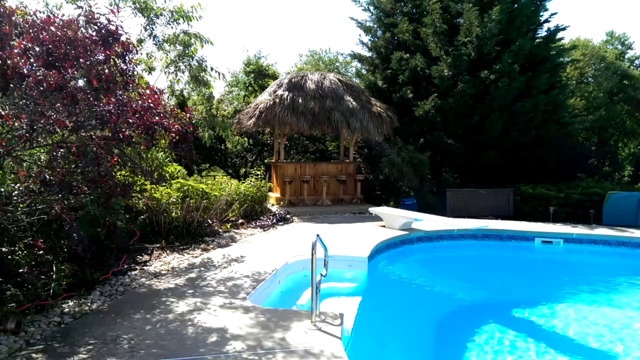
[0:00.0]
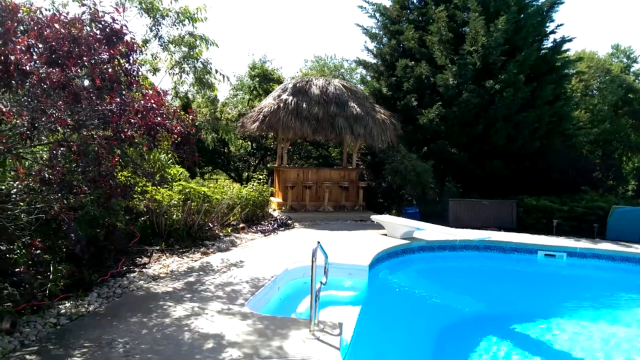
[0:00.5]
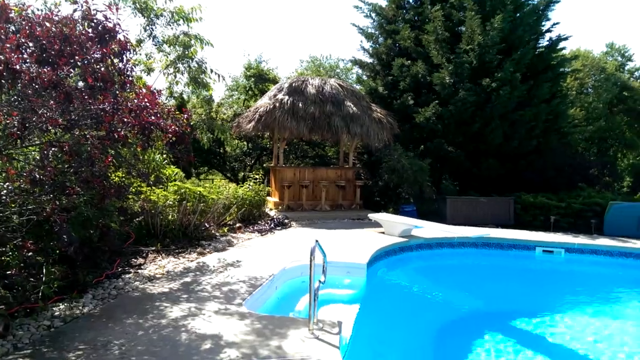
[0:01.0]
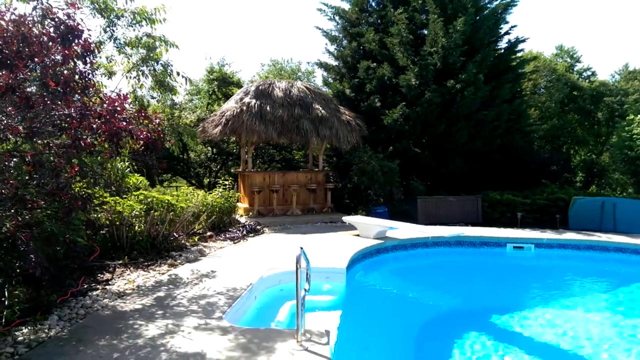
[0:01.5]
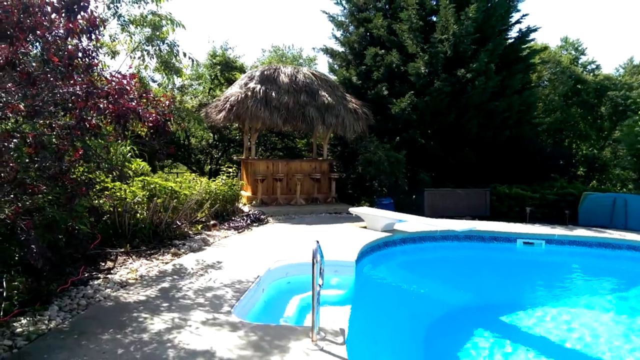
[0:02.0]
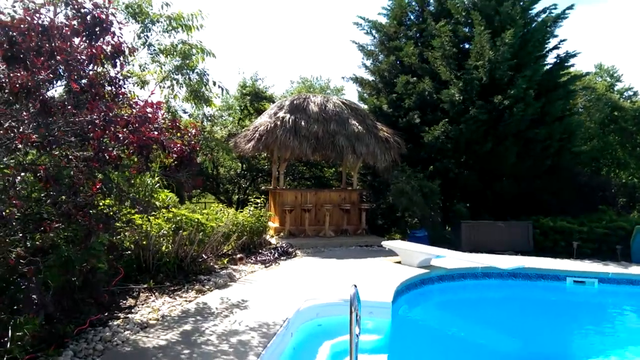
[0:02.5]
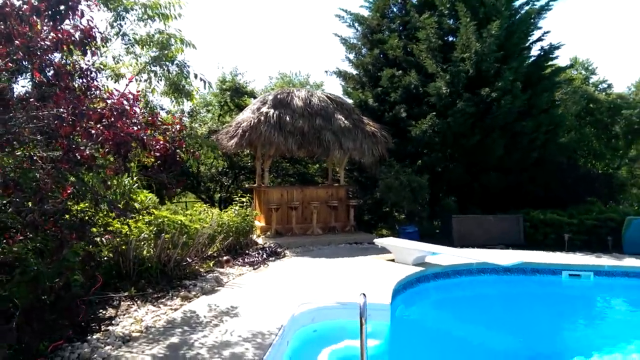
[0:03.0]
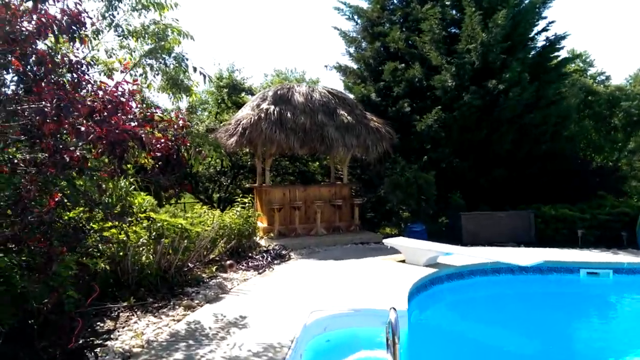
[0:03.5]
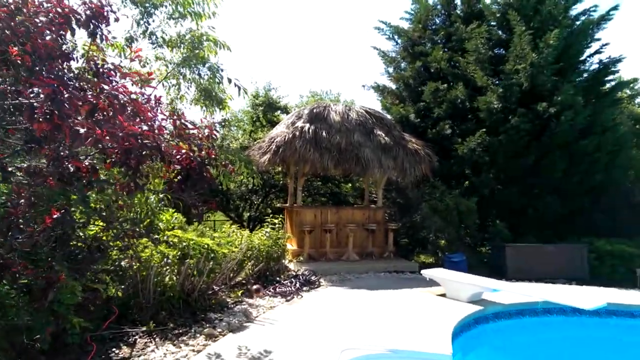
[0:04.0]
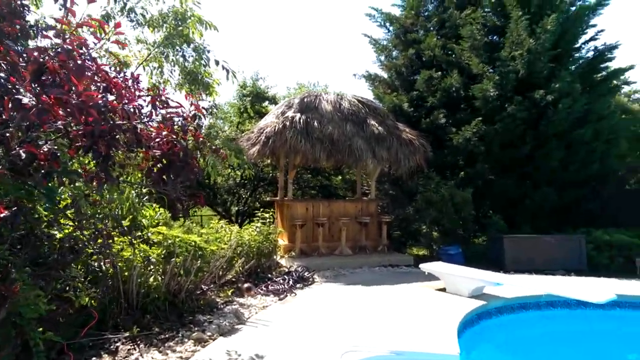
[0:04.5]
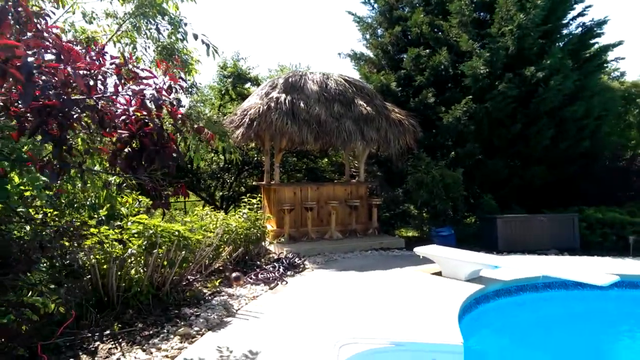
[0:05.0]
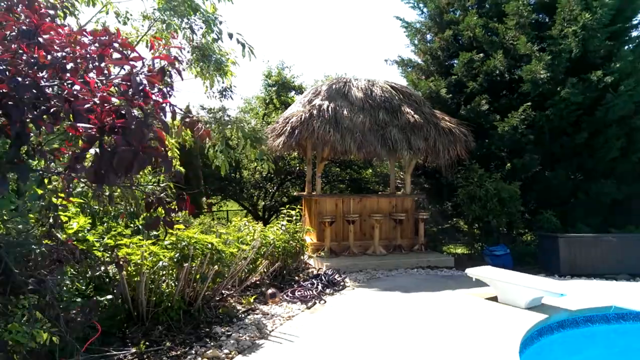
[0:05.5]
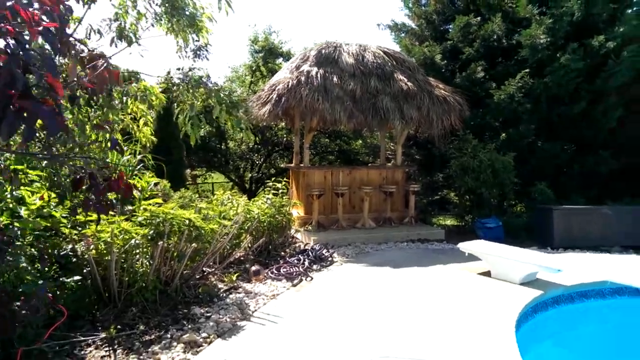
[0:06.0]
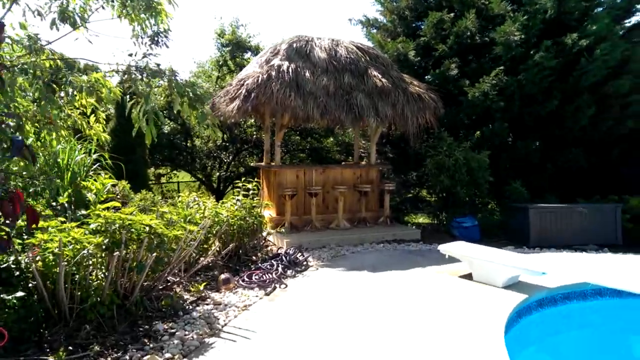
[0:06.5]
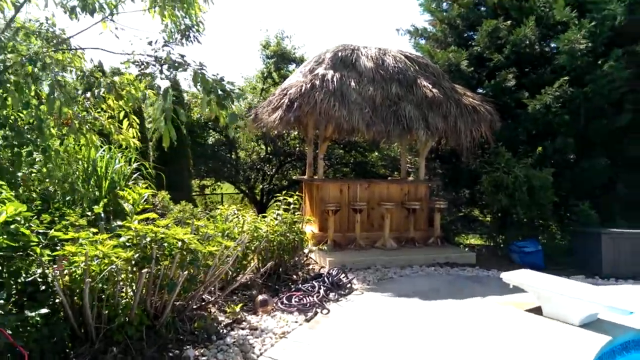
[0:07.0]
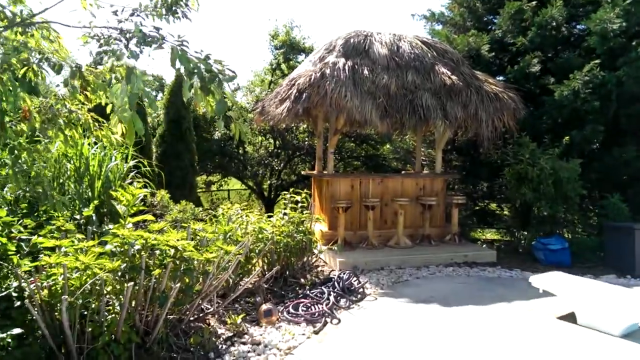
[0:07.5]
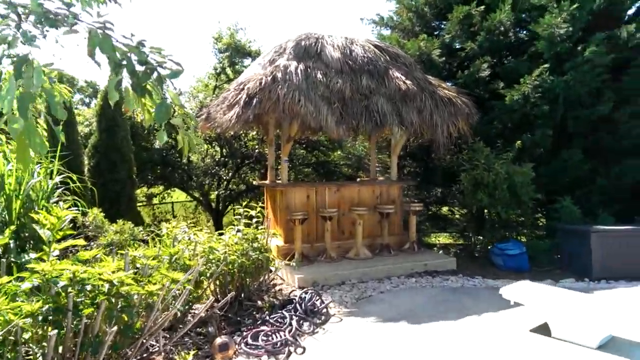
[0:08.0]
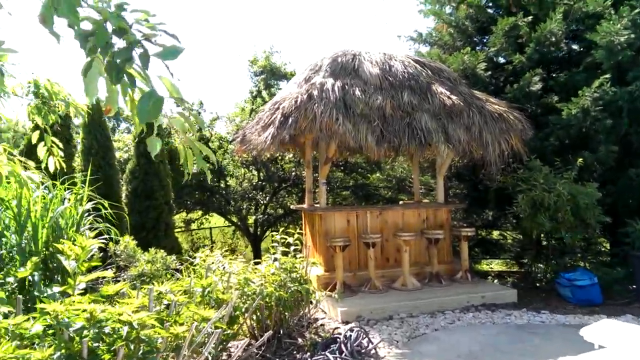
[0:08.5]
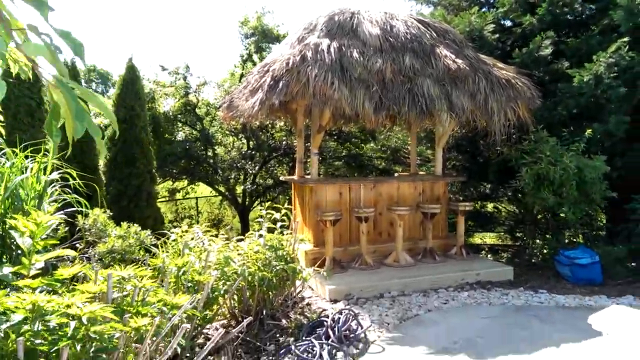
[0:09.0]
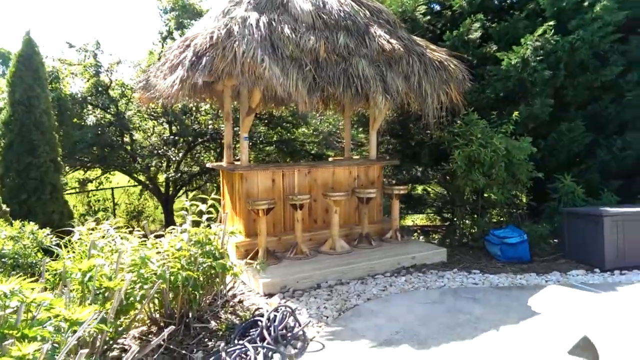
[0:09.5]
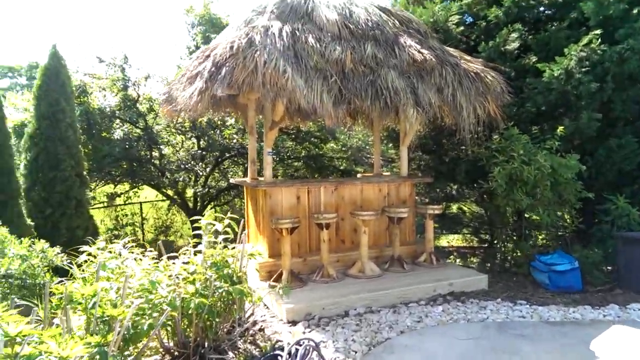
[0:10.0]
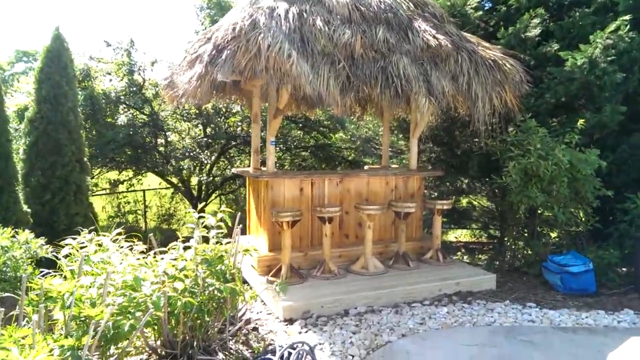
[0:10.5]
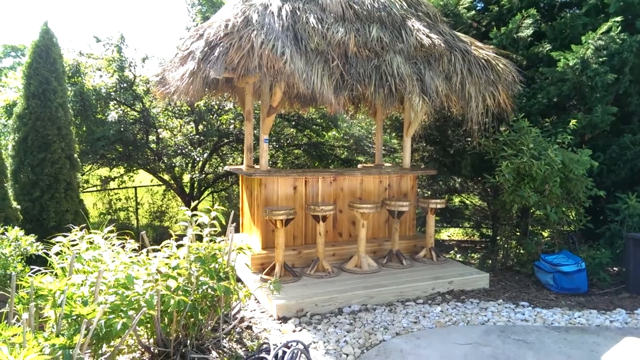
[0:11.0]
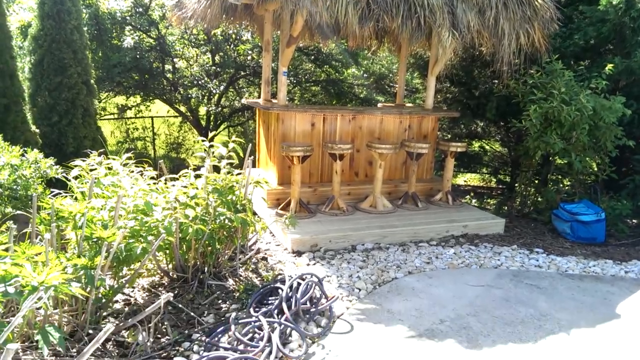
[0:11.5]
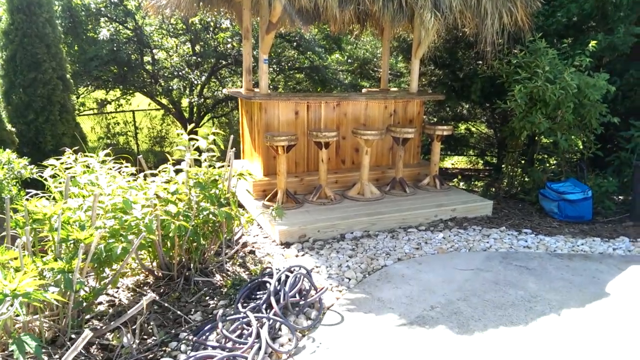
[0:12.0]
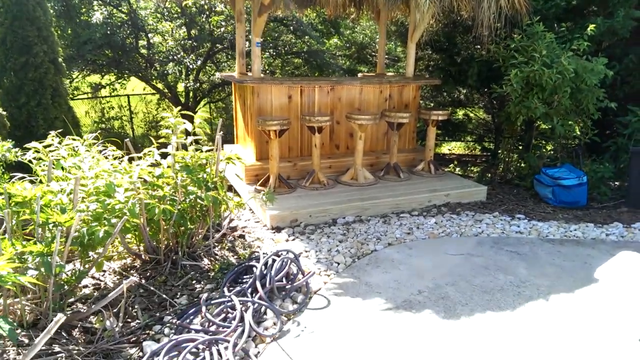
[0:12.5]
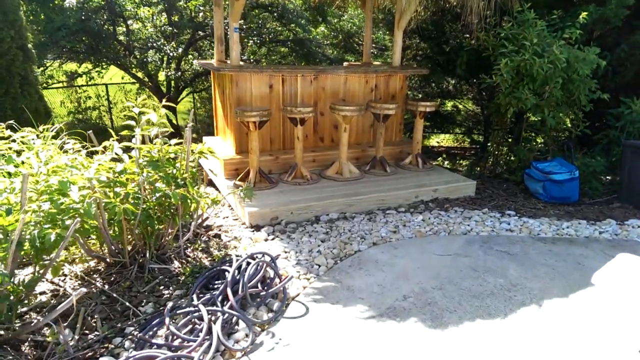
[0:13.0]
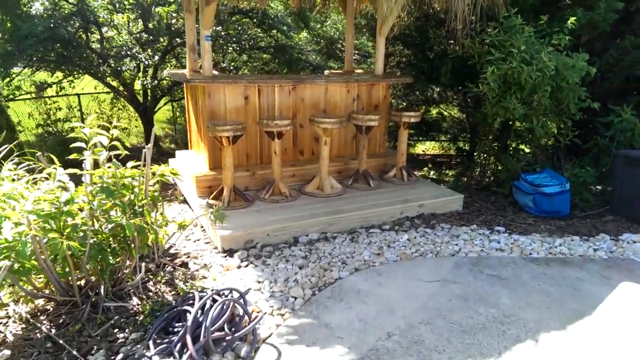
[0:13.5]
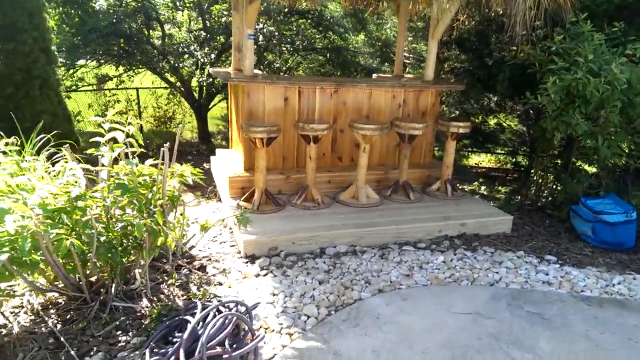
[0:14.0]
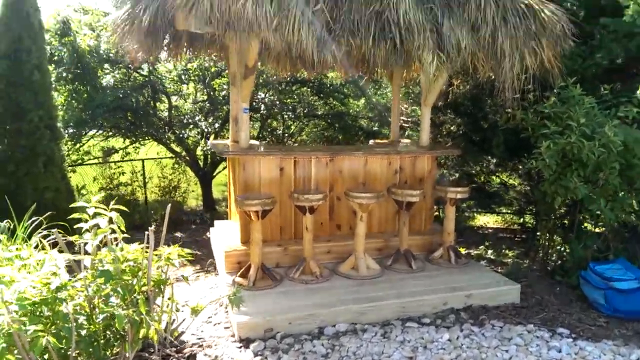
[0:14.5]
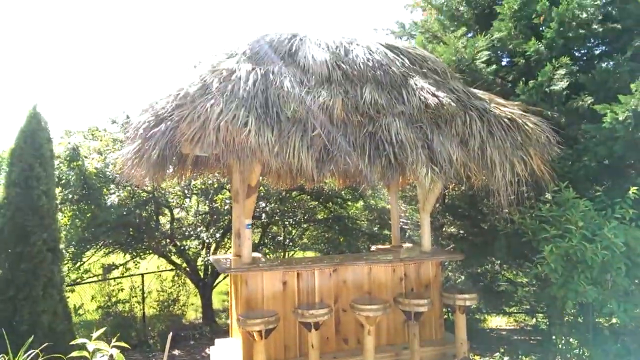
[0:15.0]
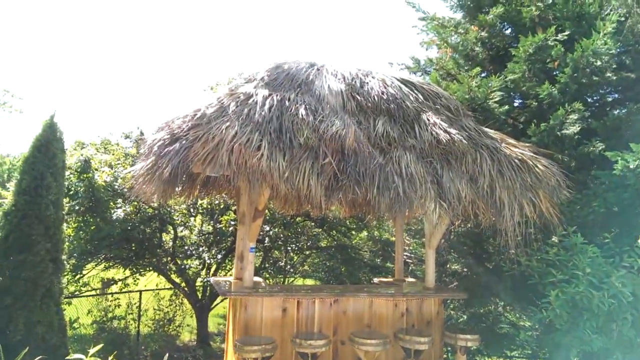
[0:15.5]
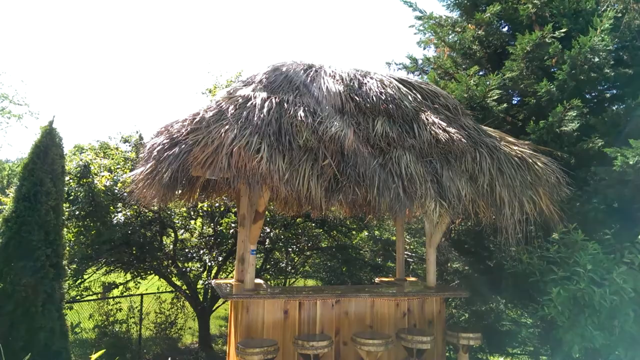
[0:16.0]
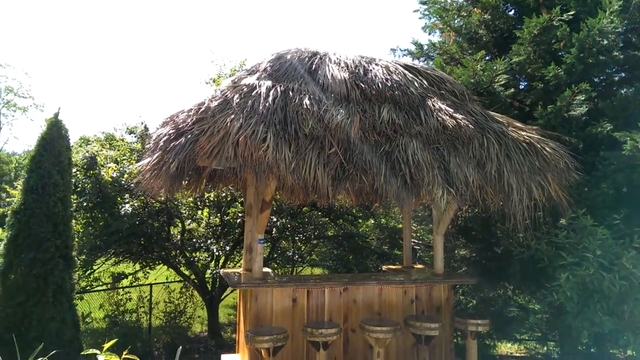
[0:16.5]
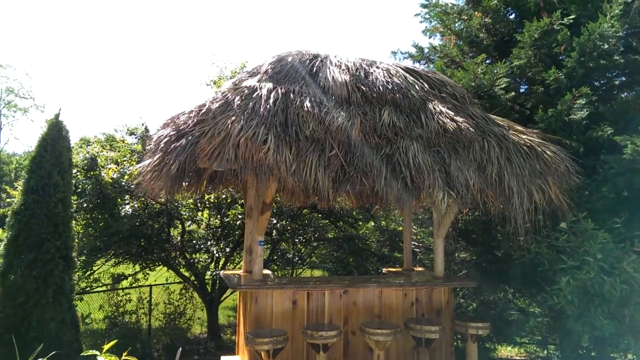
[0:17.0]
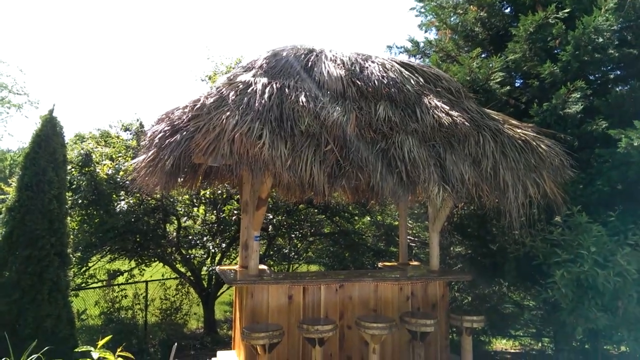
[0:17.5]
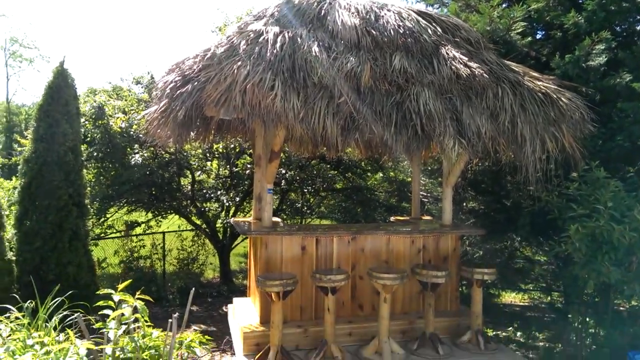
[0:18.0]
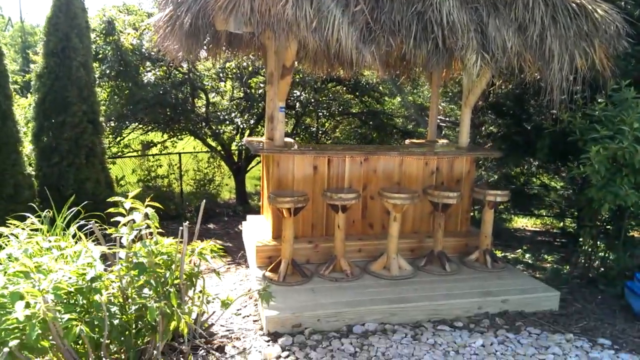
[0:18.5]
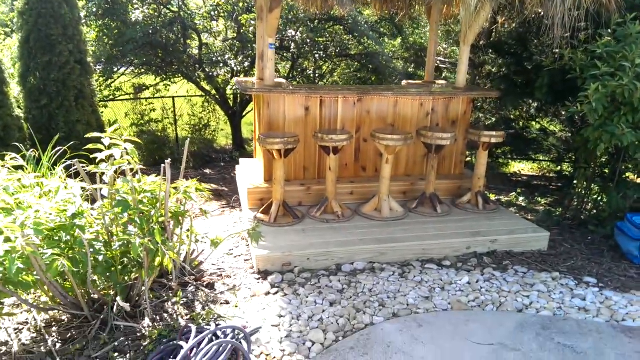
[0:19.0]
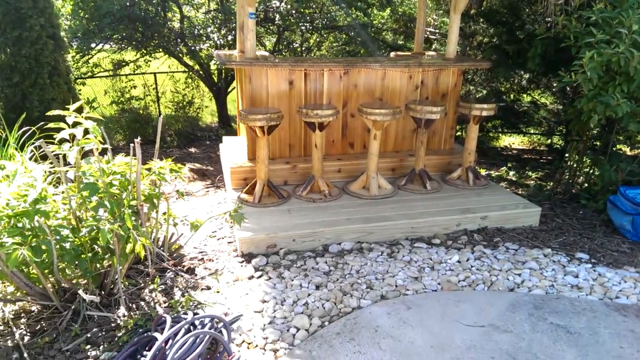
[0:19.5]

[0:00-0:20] The video begins with a view of an outdoor pool. At the left corner of the pool is a small, open wooden construction with a thatched roof, like a bar or a cabana. There are trees to the left and to the right; it is a very woody area. The camera moves toward the thatched structure, revealing the wooden bar and five wooden barstools right at the structure. The floor has gray stones and pebbles on it. The camera pans up to capture more of the thatched roof as well as the sun shining, and behind it are dense gray trees and vegetation. The camera then pans downward and focuses on the five stools. The water is a clear blue, the sky is very clear and the day is bright. The thatched roof is a dried-out, faded ash color.